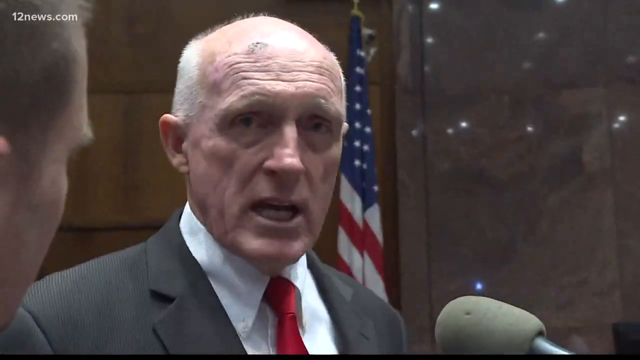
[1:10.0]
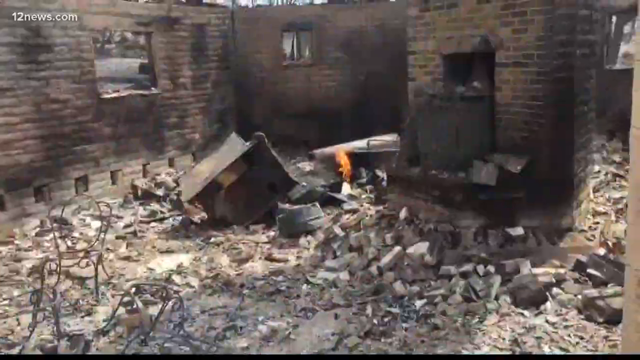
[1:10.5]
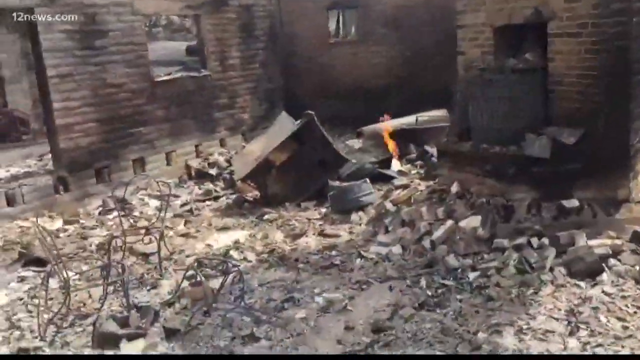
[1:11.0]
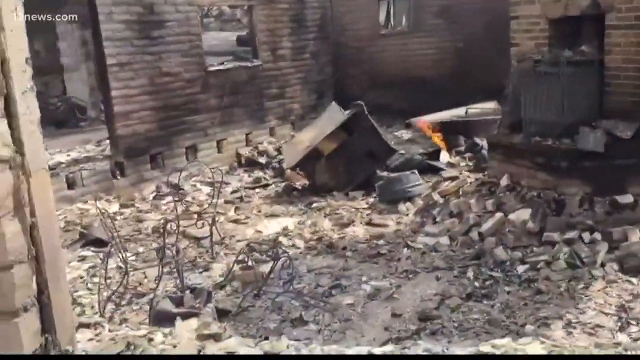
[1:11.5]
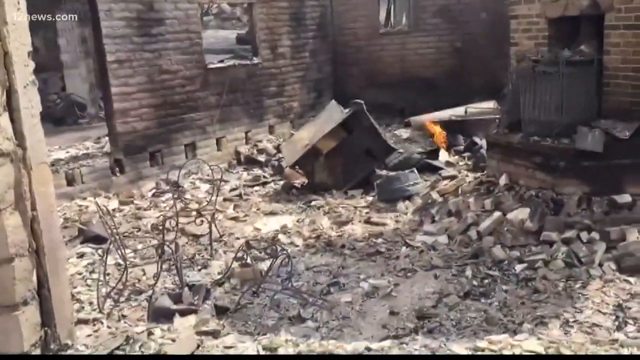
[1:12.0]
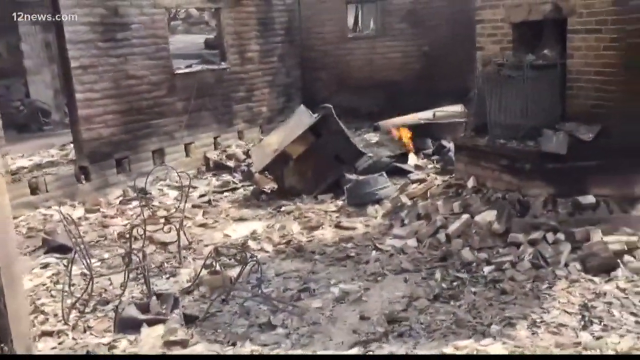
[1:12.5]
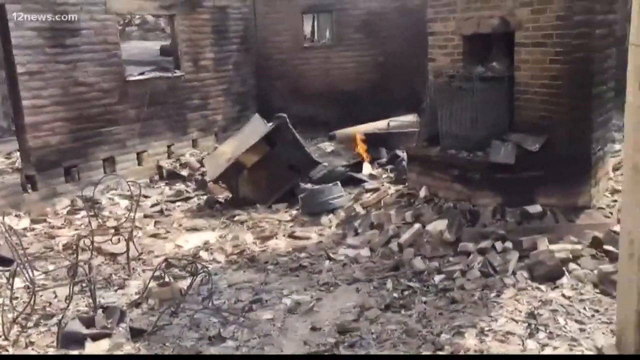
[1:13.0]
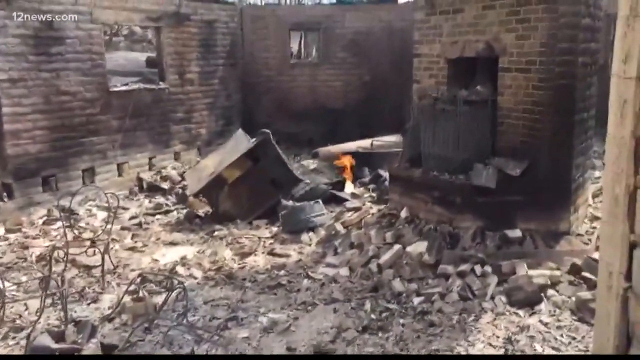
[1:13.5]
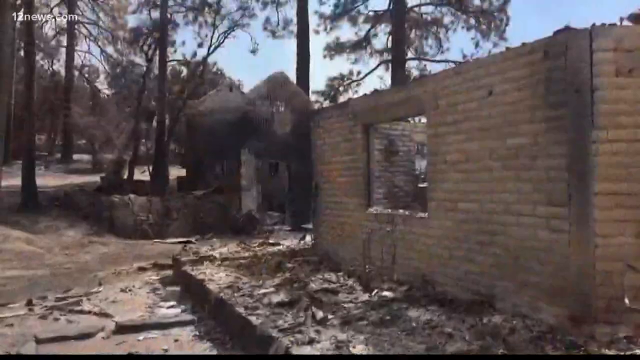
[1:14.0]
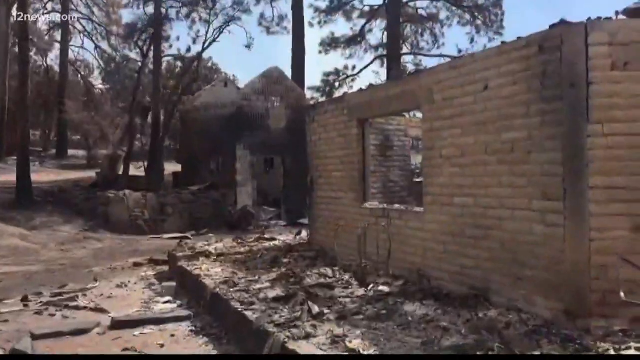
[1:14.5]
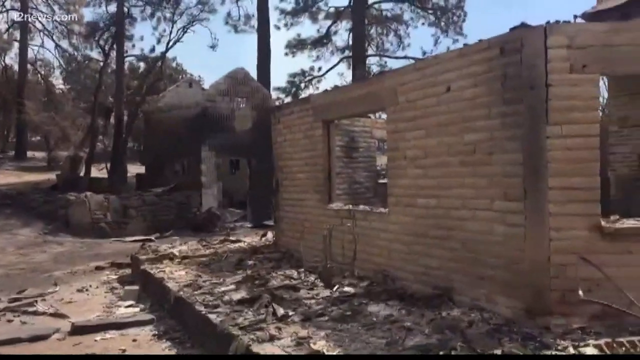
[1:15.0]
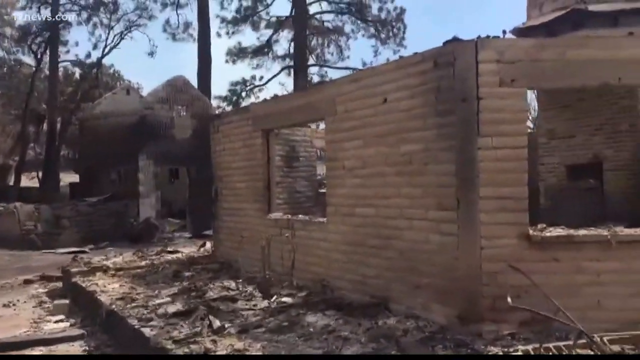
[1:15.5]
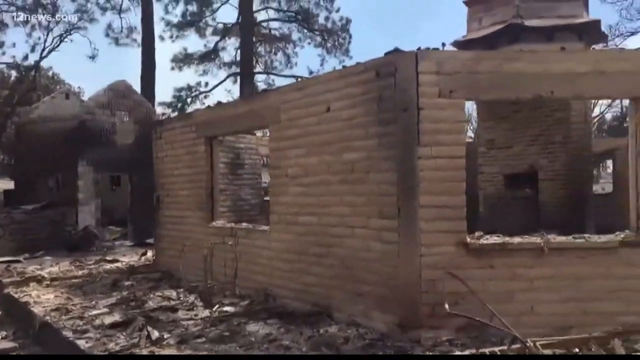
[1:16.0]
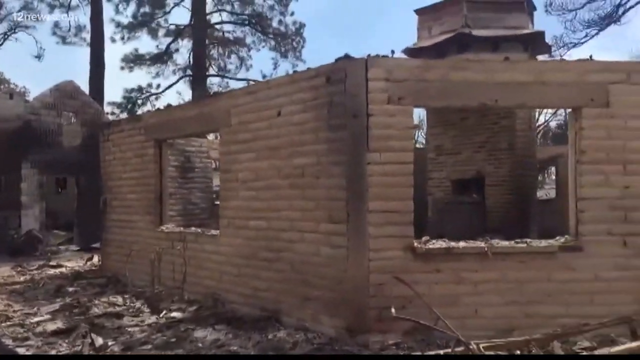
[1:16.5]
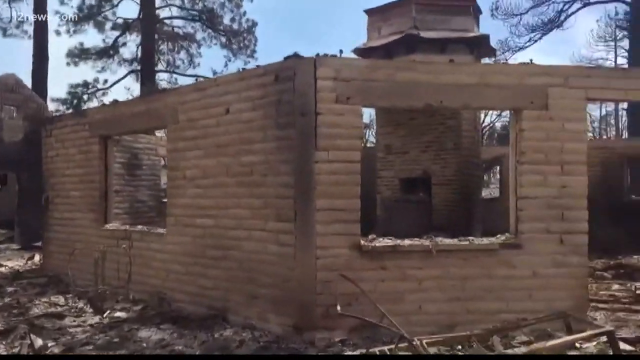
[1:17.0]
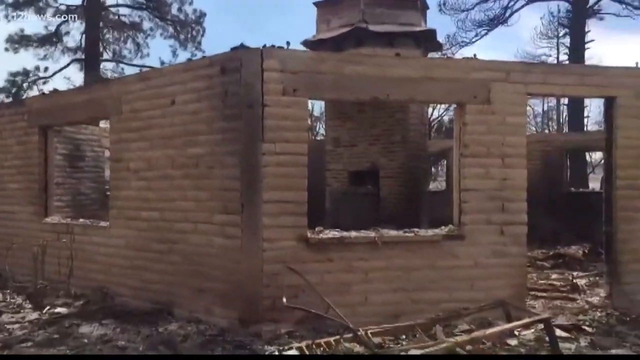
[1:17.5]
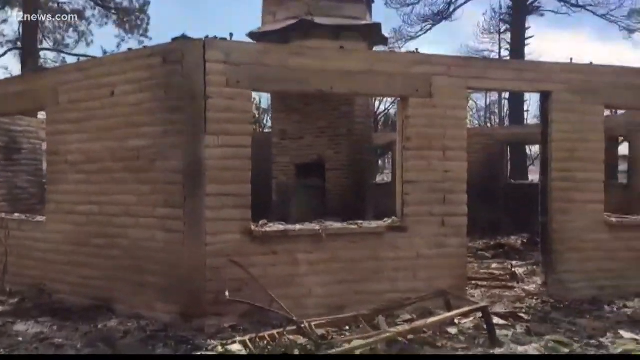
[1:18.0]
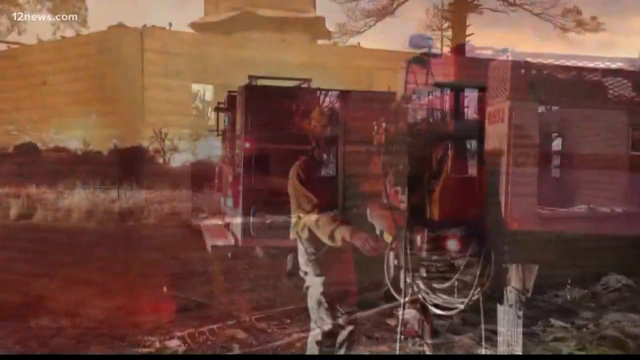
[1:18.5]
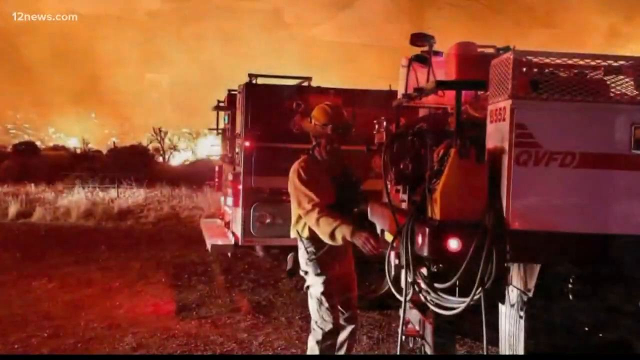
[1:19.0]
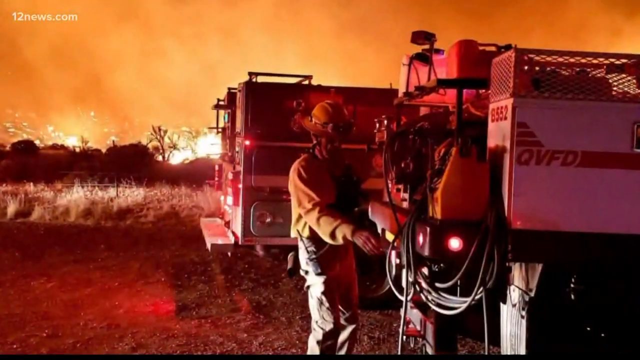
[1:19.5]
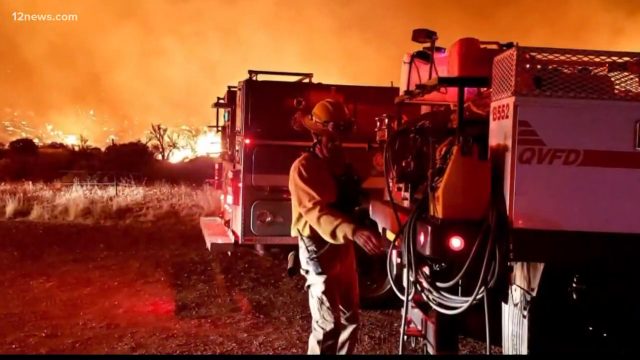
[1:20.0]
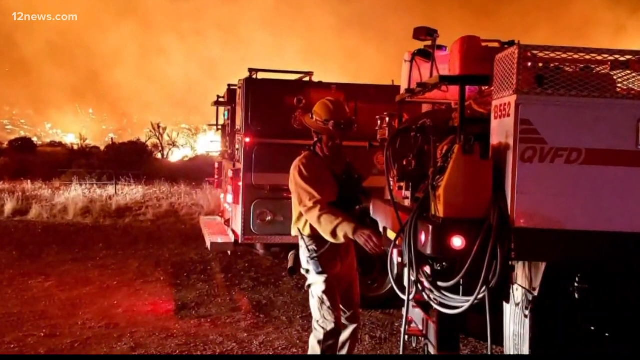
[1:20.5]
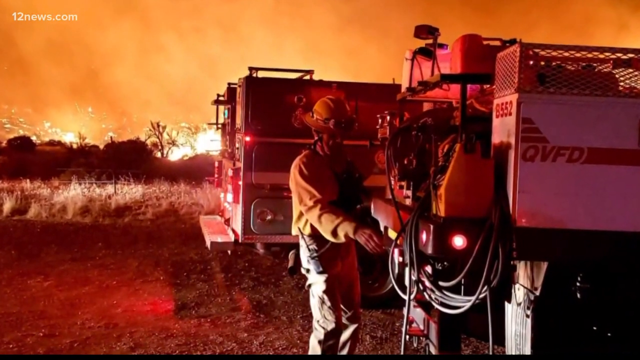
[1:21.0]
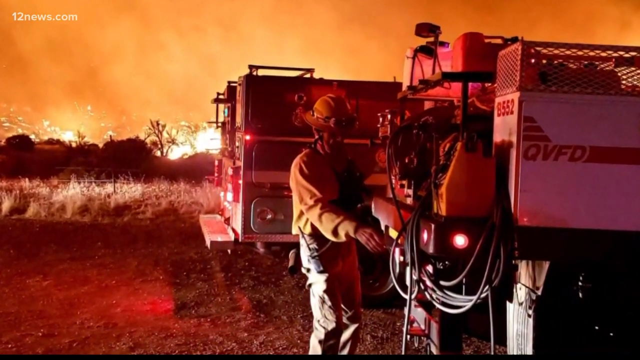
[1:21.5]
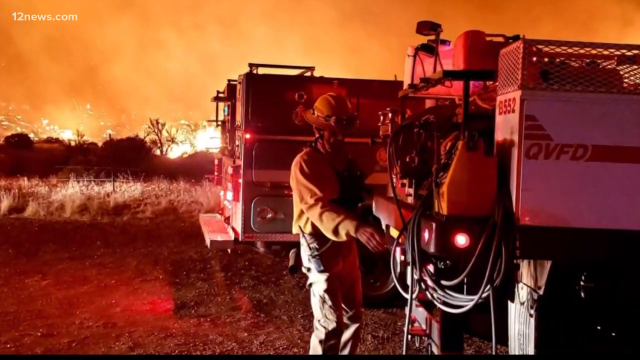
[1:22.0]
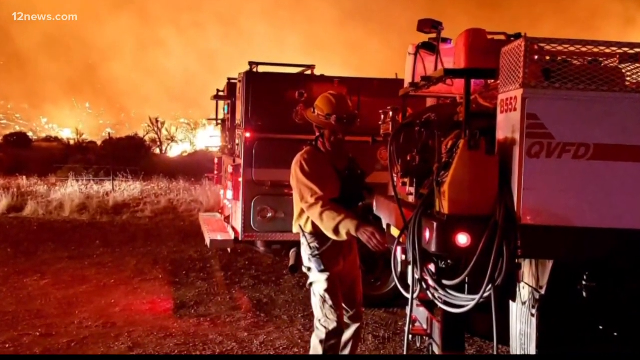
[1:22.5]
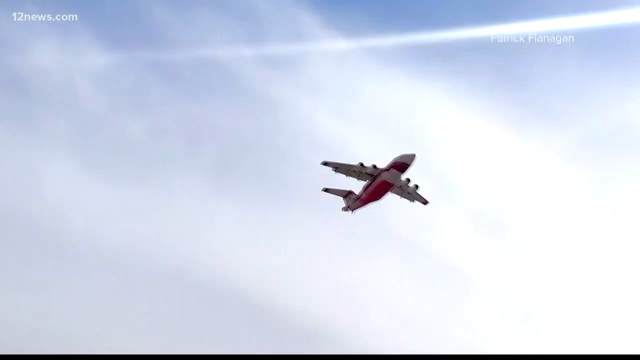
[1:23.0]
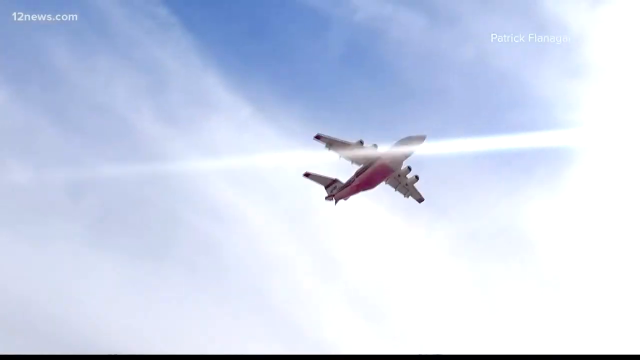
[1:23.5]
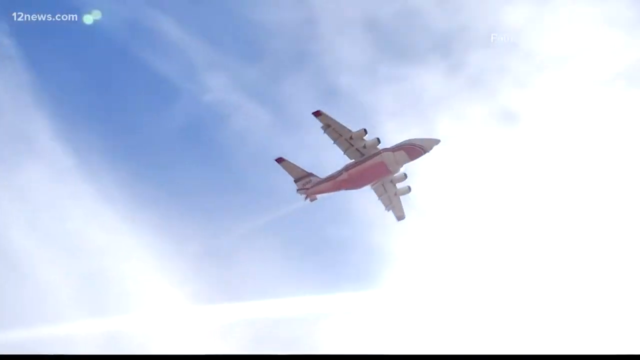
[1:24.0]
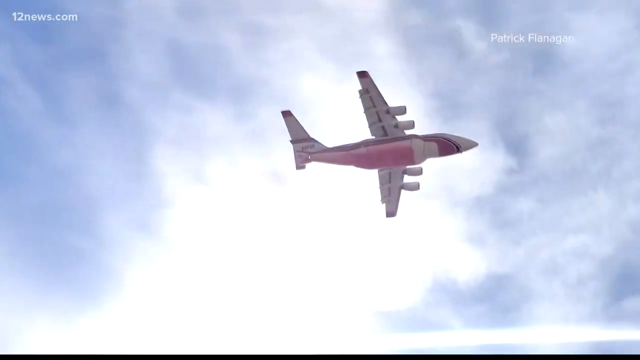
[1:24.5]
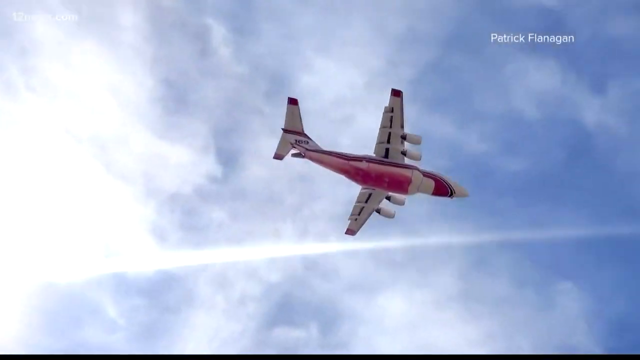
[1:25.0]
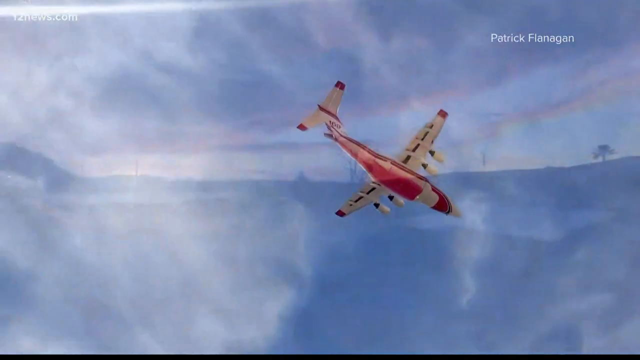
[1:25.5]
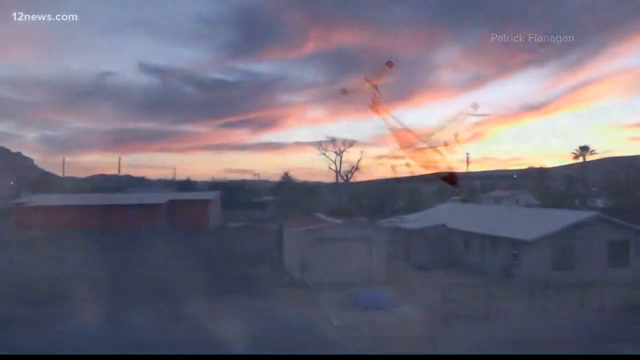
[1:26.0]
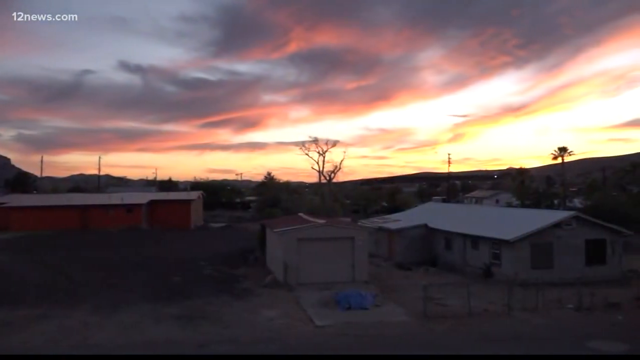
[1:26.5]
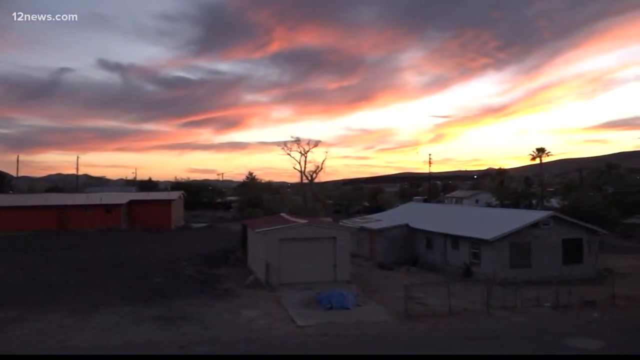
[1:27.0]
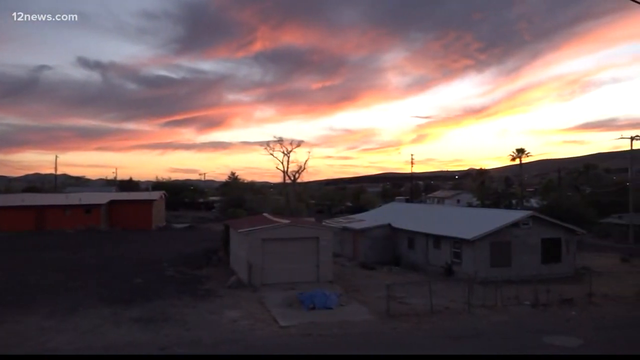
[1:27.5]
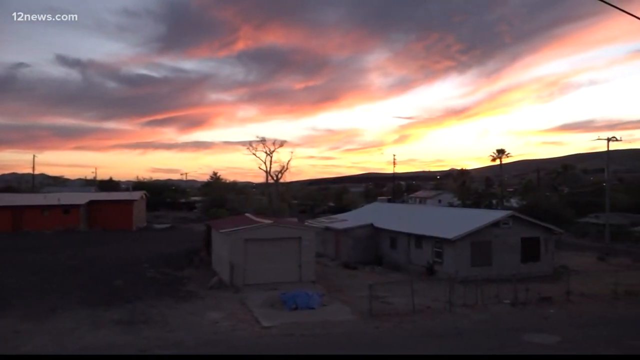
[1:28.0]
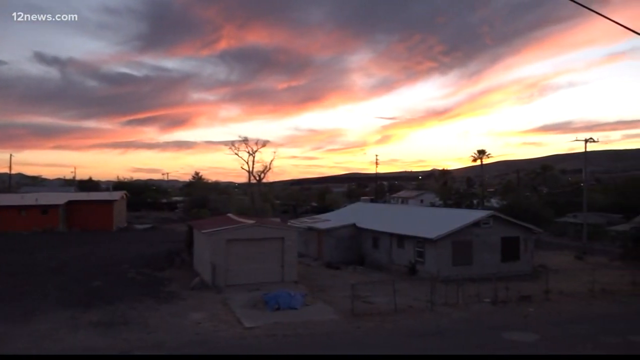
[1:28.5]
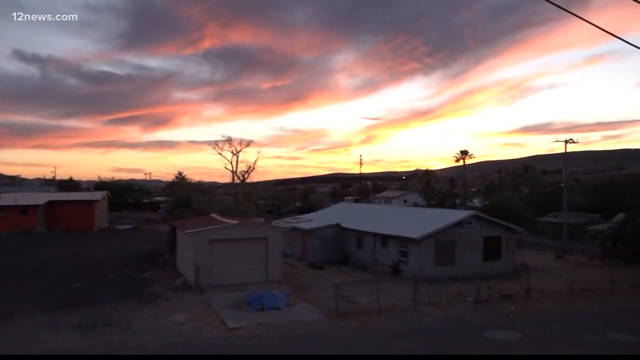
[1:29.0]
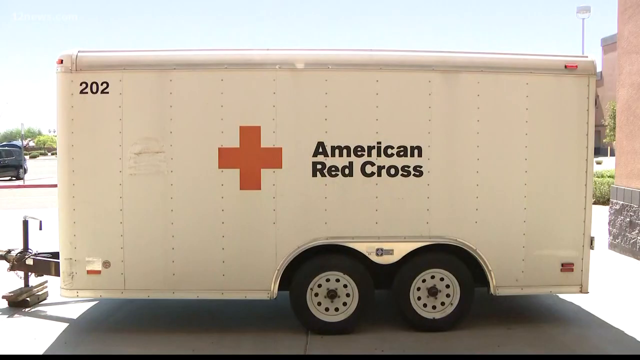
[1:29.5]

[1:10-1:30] An old man with a receding hairline, in a black suit, white shirt and black tie, gives a statement before a rapid cut back to destroyed homes and the remnants of burned-down buildings, both inside and out. Several pictures then show fires and first responders at the raging wildfire. Shots from Patrick Flanagan show firefighting planes and helicopters offloading fire retardant. What appears to be a sunset over a small neighborhood follows, before an American Red Cross trailer is shown prominently on screen. There are about five to six jump cuts, varying in material.